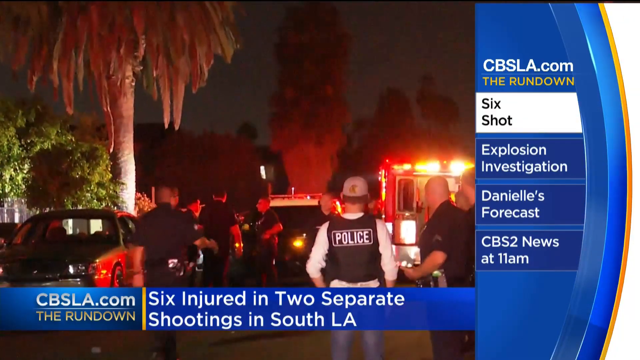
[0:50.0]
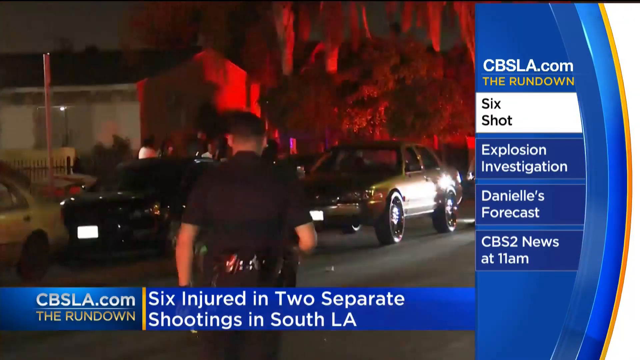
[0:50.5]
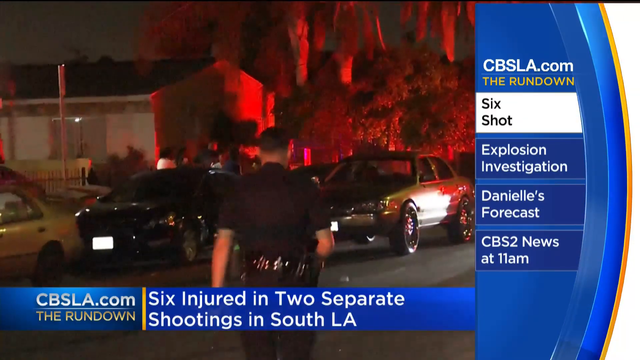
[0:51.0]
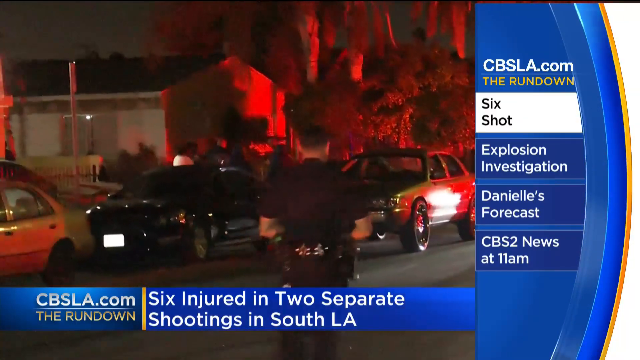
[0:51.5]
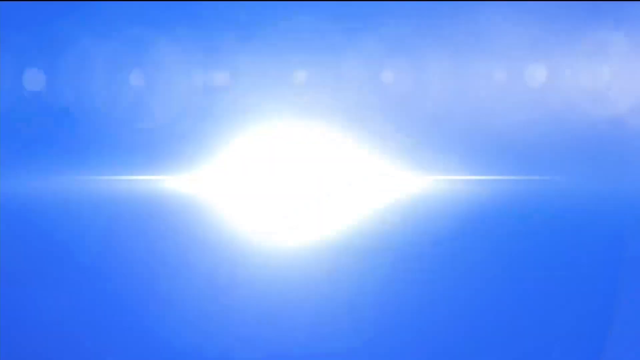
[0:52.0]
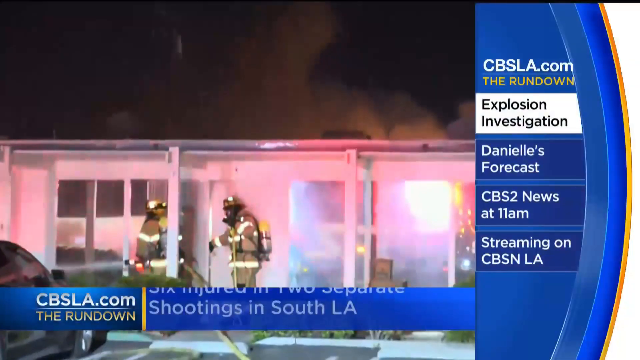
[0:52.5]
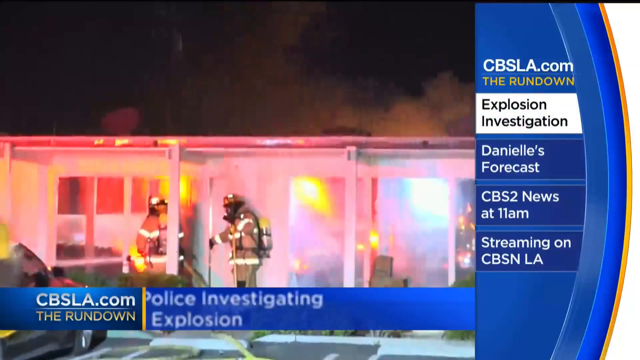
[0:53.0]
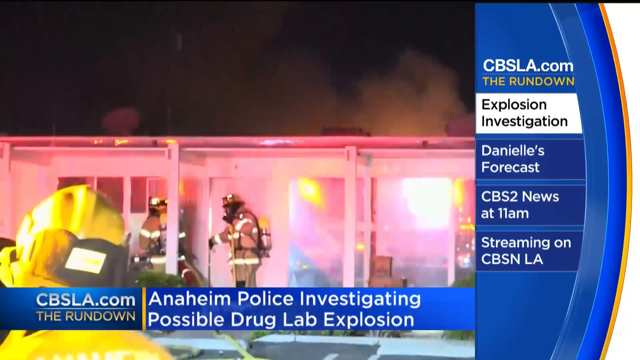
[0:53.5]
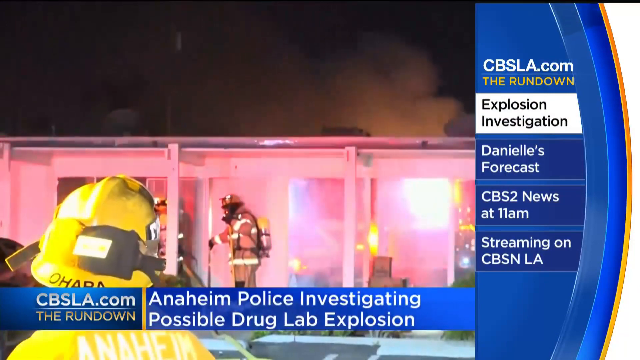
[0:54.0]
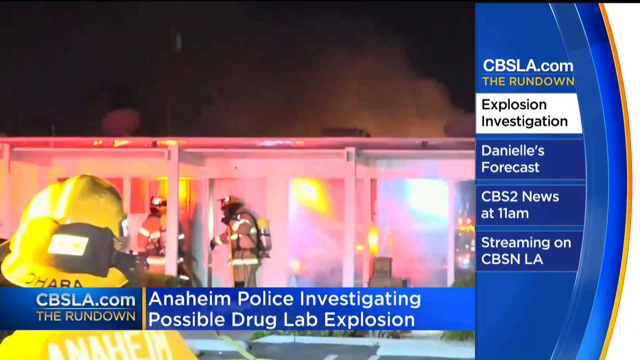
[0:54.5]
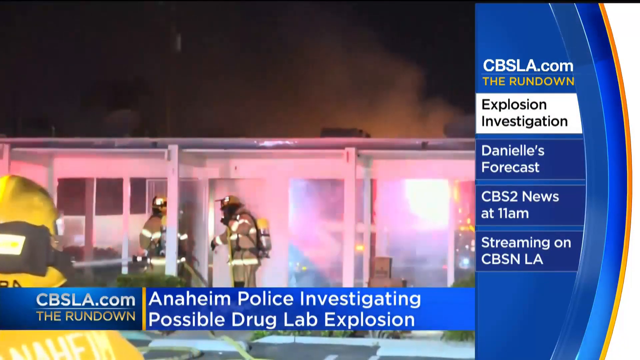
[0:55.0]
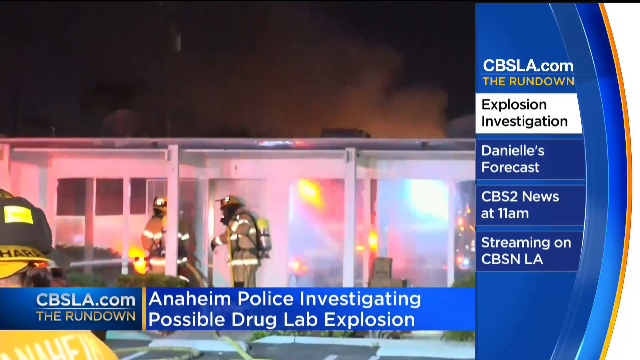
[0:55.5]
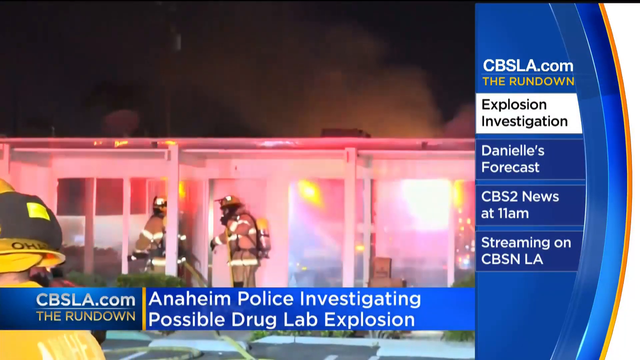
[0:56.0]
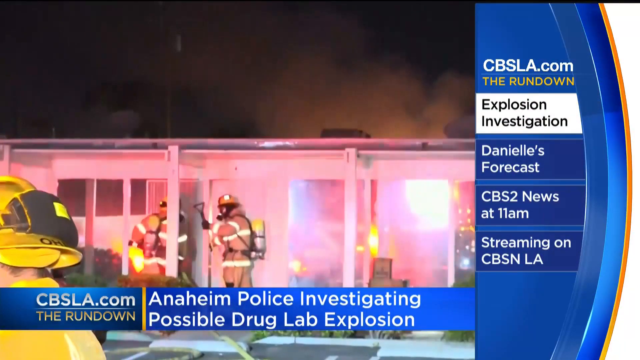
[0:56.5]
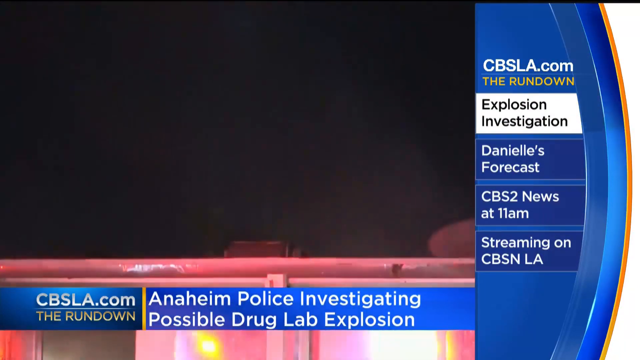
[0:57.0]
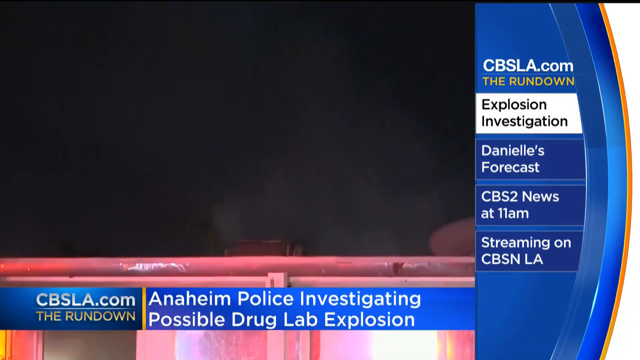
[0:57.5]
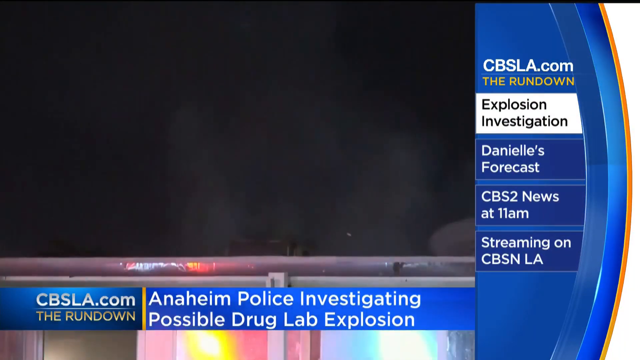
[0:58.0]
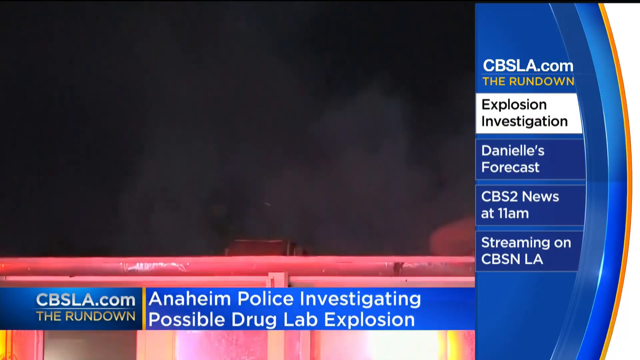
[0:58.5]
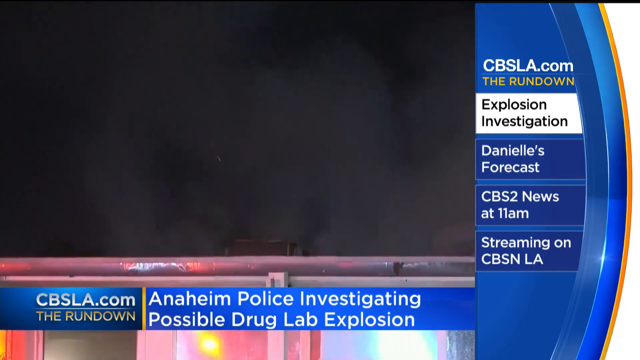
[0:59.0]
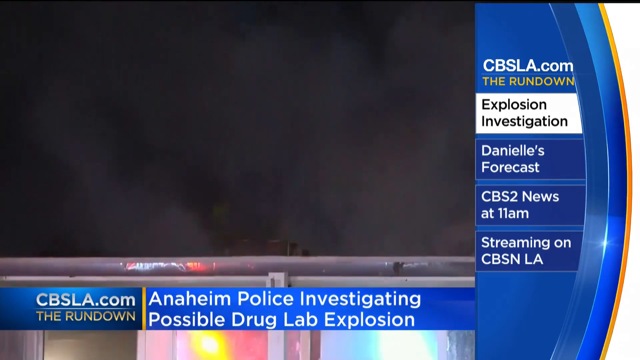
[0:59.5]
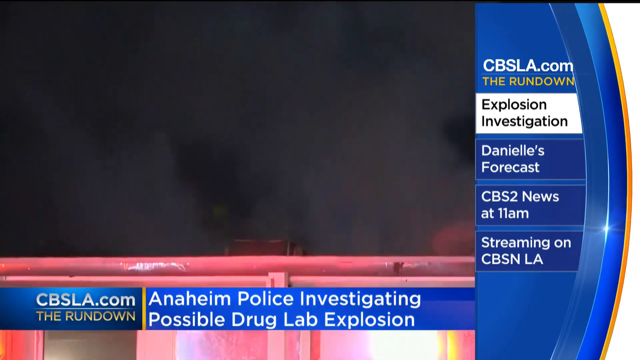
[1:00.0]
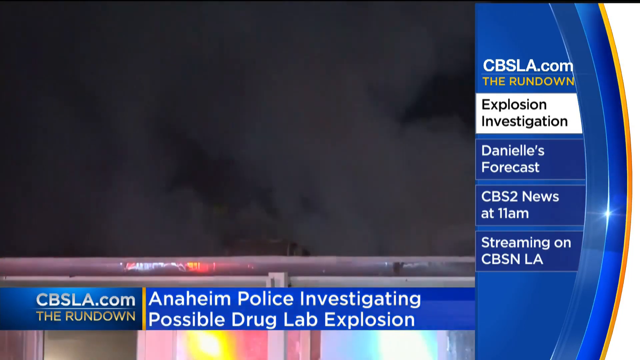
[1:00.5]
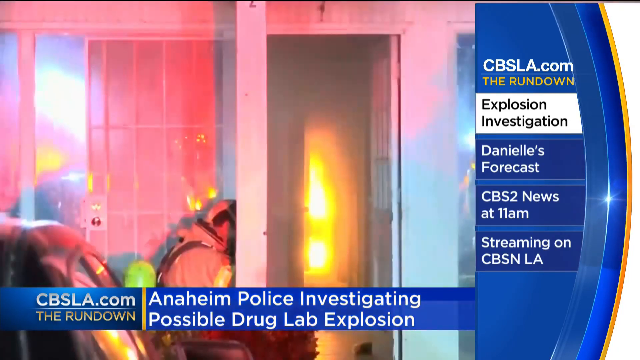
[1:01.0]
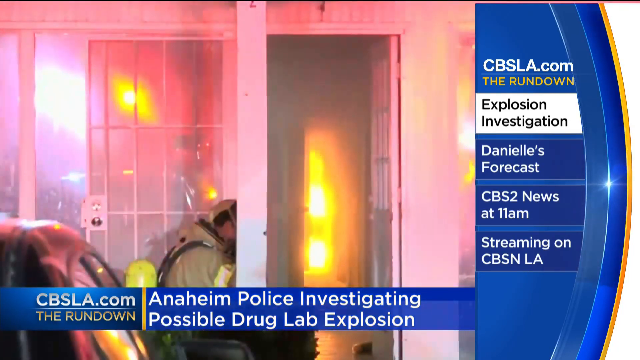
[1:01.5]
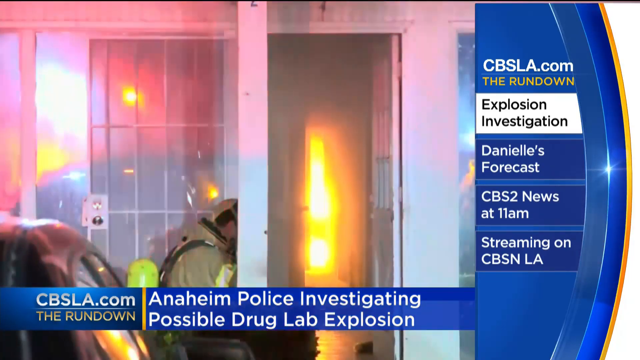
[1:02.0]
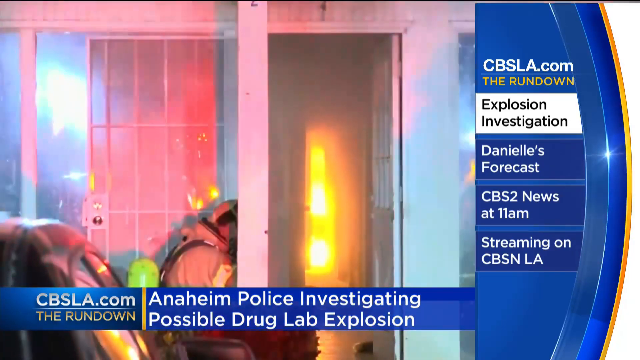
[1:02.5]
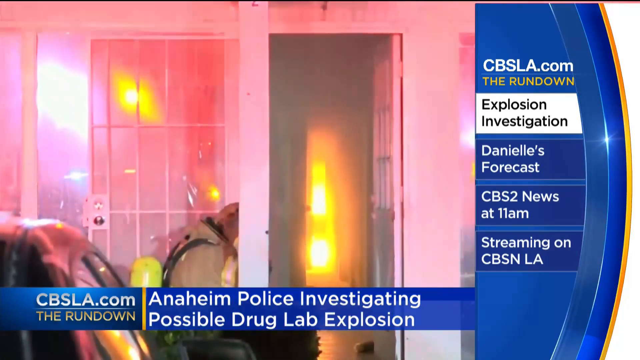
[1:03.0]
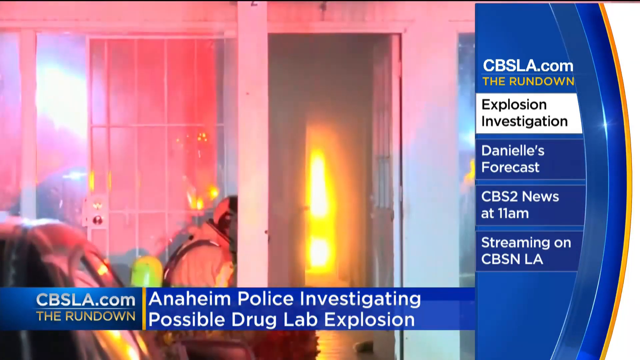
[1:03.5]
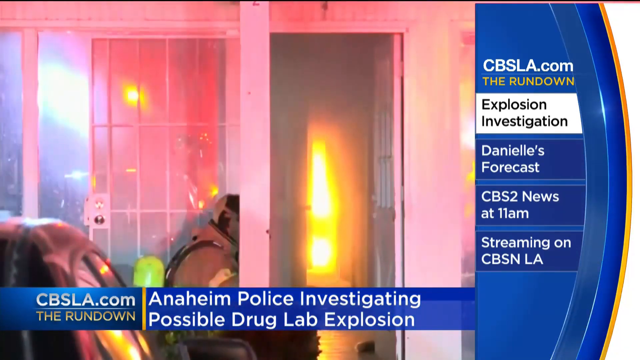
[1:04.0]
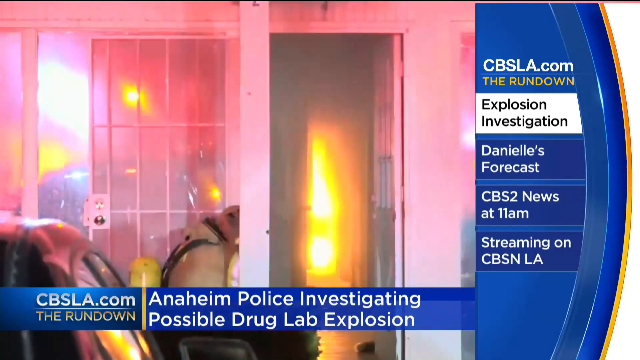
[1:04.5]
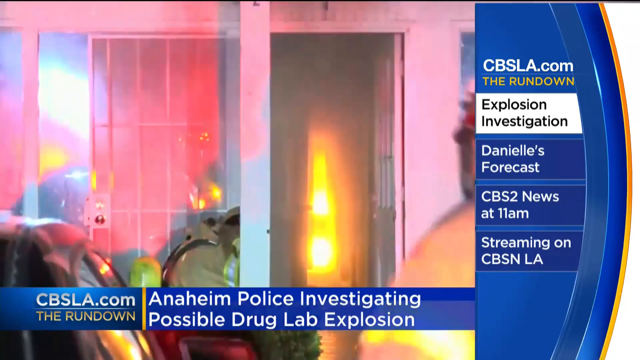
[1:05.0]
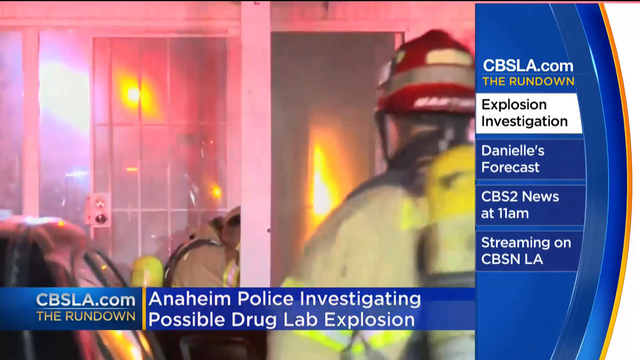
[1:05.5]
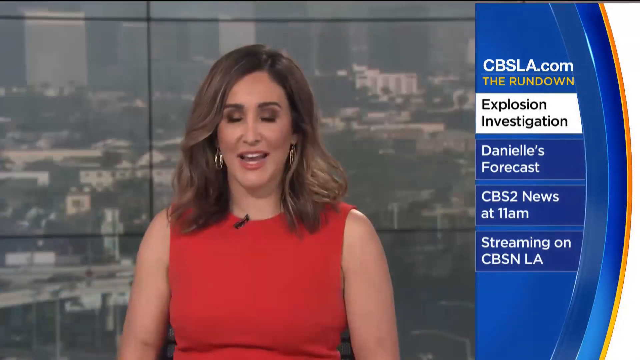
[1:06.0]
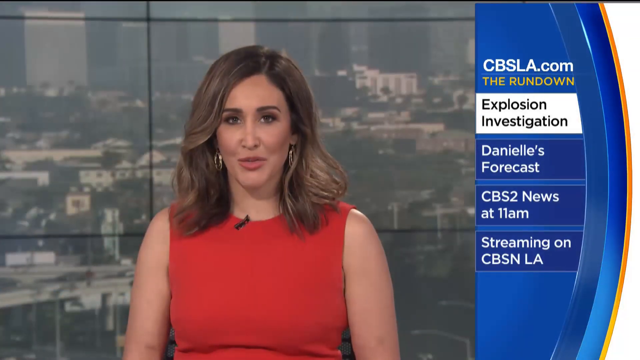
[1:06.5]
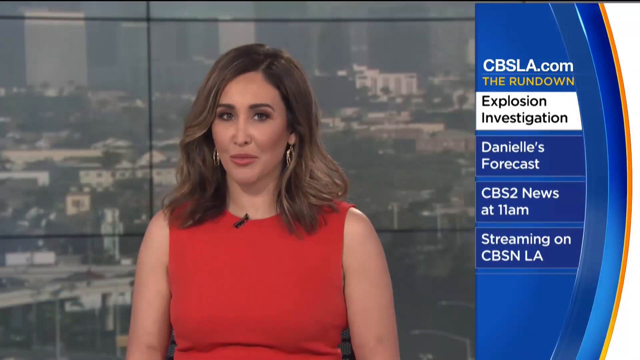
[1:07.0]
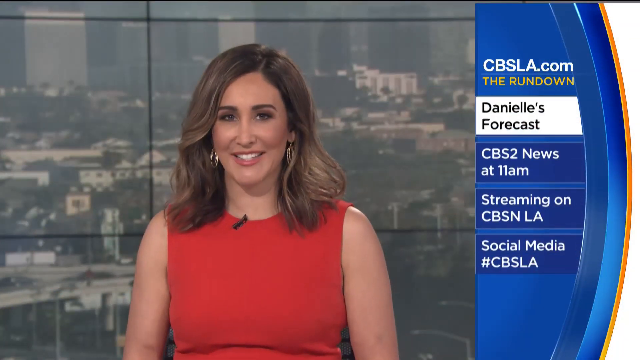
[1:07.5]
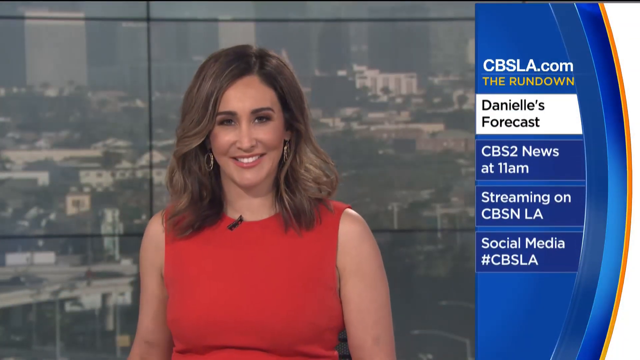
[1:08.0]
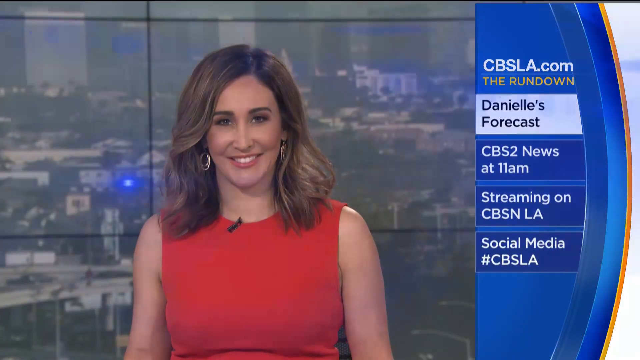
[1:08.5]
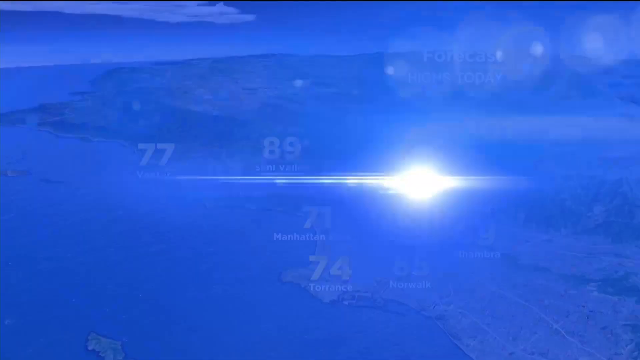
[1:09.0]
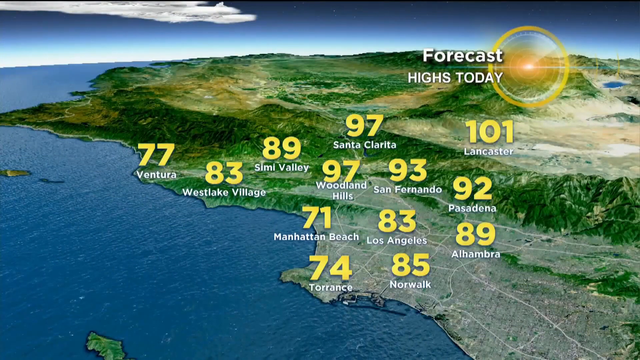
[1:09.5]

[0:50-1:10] An explosion investigation is shown, with the words "drug lab explosion." Firefighters are seen trying to get into the building, apparently trying to stop the fire. A lady in red, Danielle, is seen showing the forecast. The report returns to the explosion, which seems to be related to a drug lab, as firefighters are busy handling the situation. Then it goes back to Danielle's forecast.